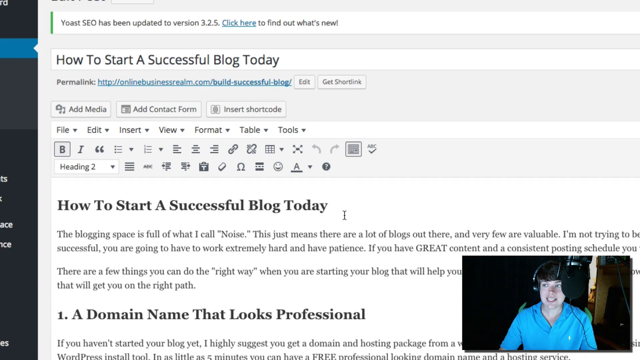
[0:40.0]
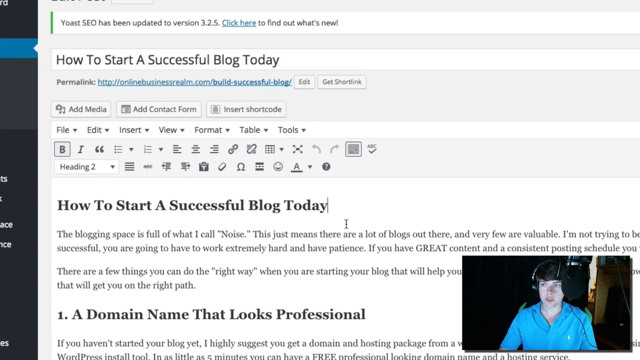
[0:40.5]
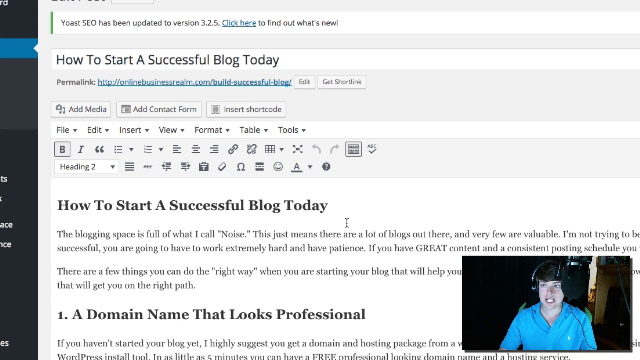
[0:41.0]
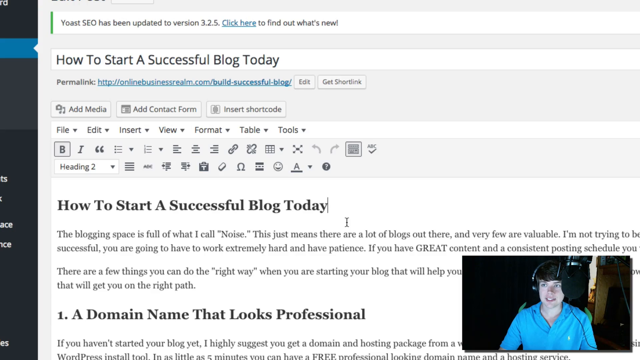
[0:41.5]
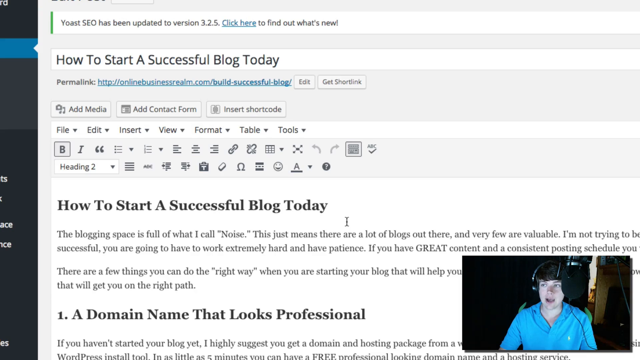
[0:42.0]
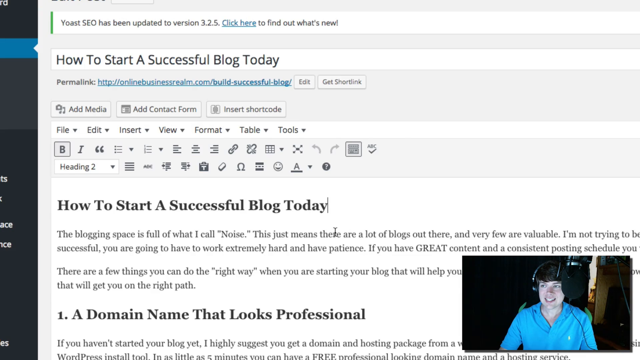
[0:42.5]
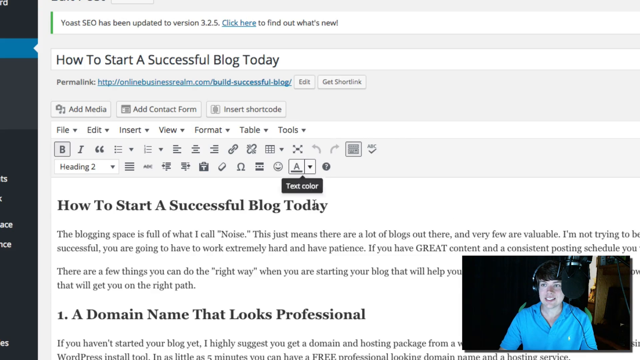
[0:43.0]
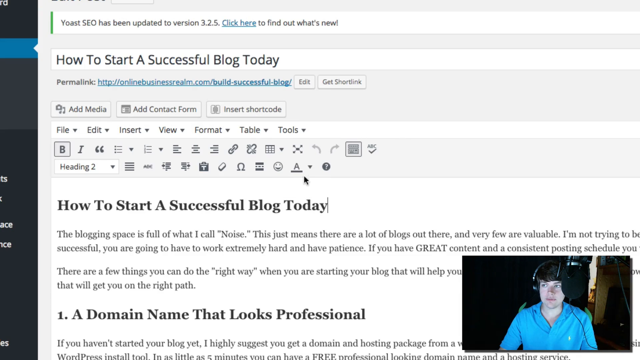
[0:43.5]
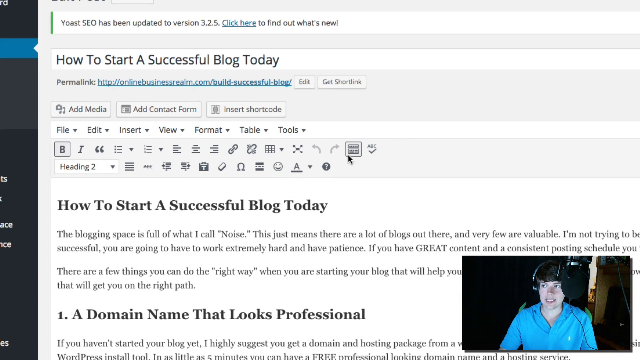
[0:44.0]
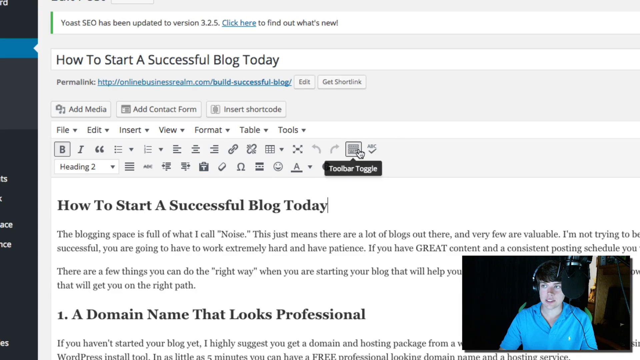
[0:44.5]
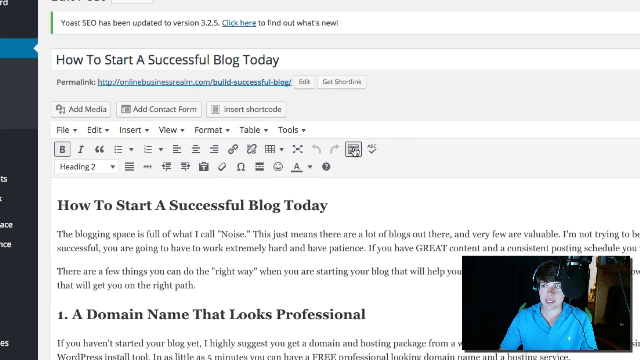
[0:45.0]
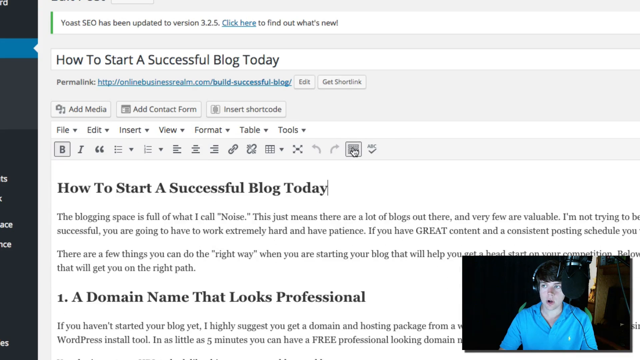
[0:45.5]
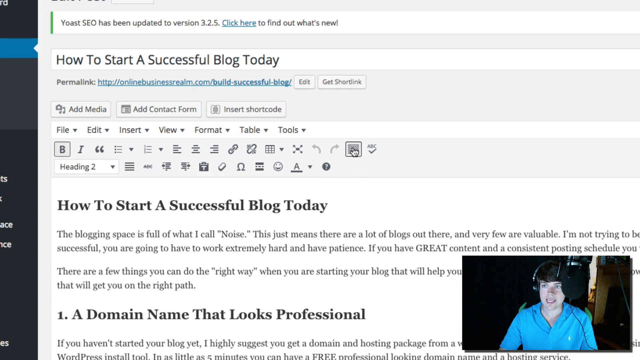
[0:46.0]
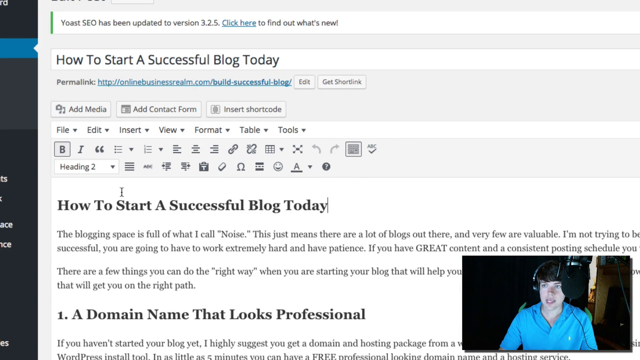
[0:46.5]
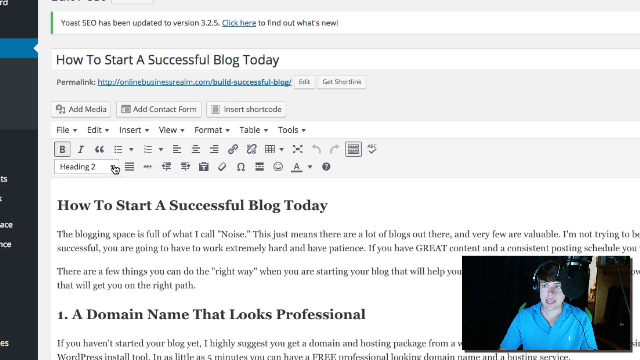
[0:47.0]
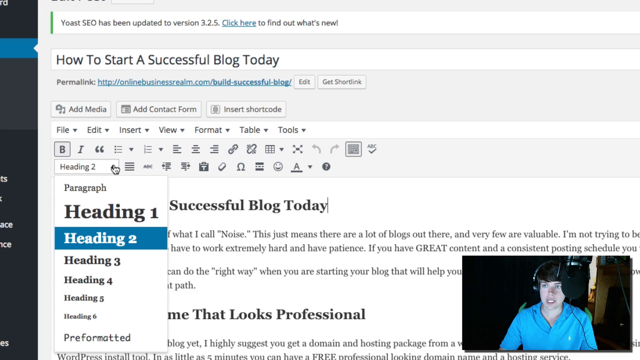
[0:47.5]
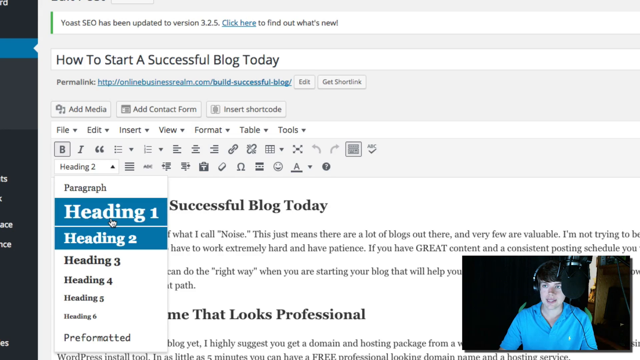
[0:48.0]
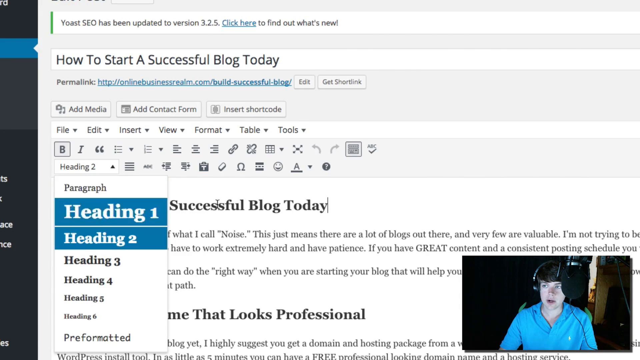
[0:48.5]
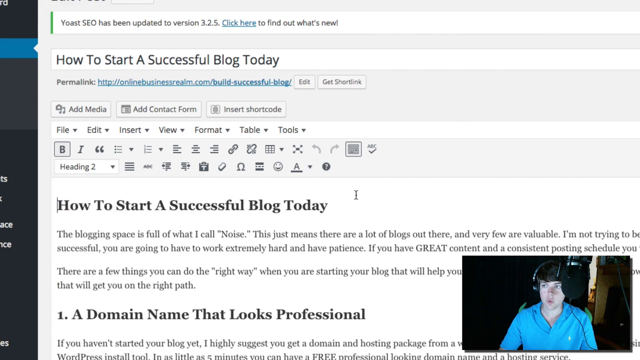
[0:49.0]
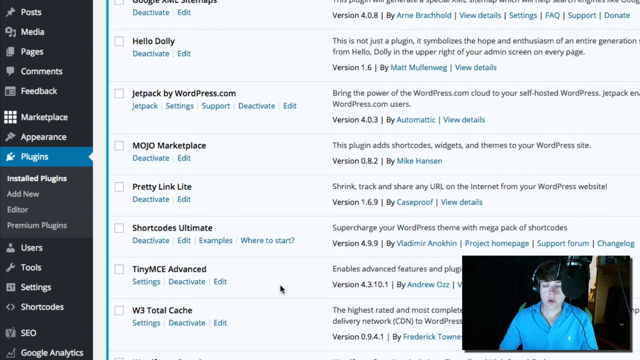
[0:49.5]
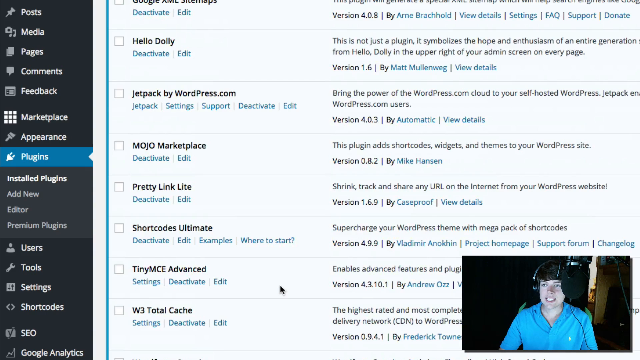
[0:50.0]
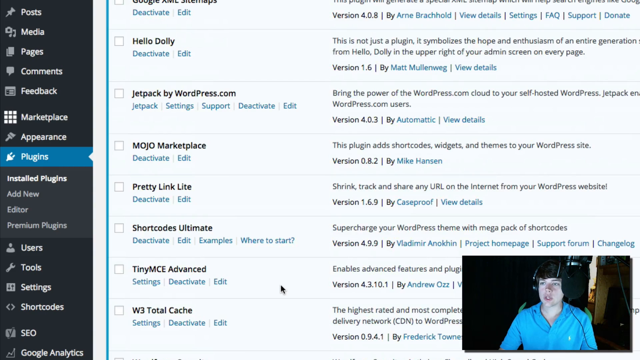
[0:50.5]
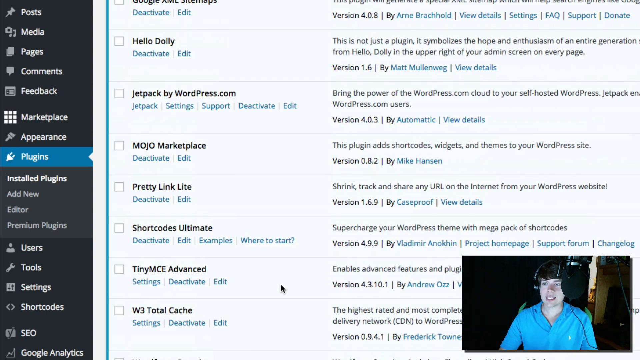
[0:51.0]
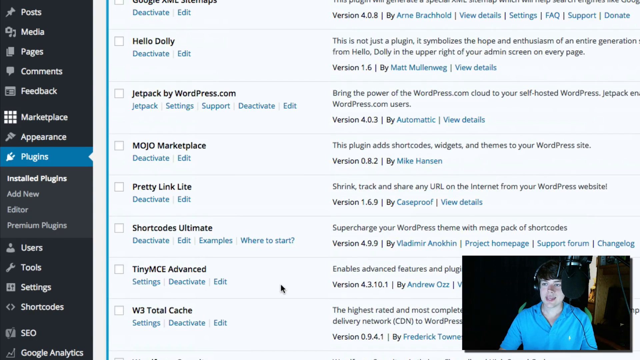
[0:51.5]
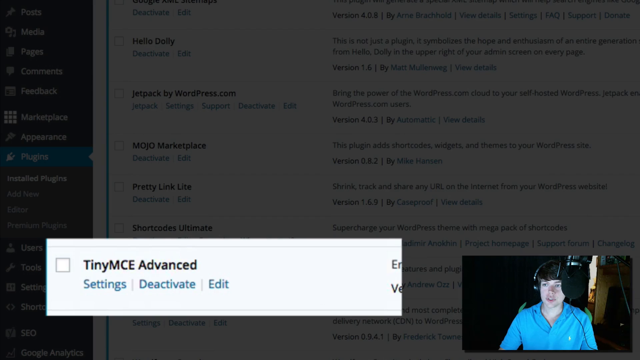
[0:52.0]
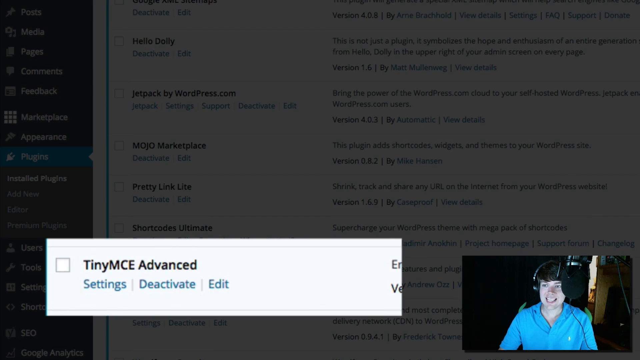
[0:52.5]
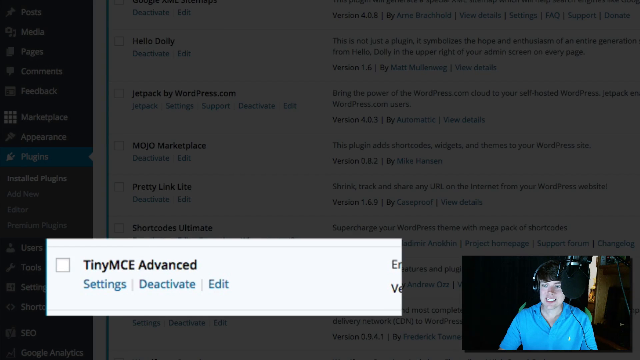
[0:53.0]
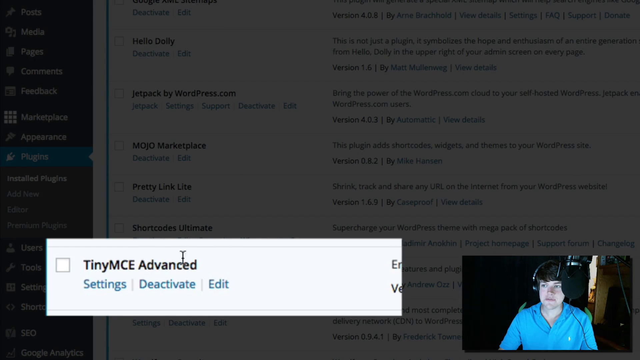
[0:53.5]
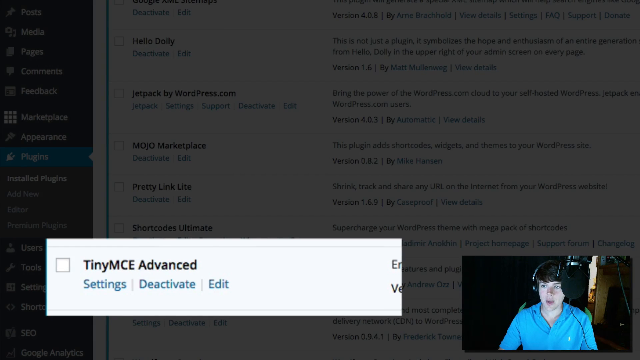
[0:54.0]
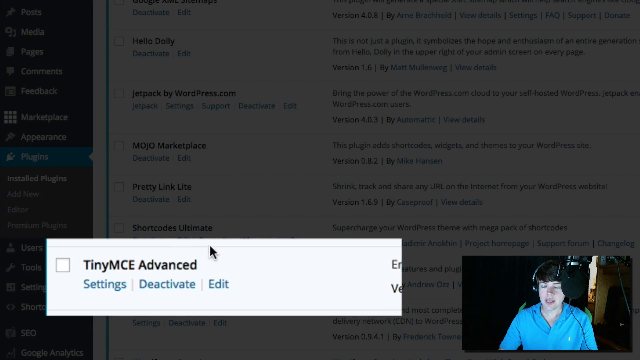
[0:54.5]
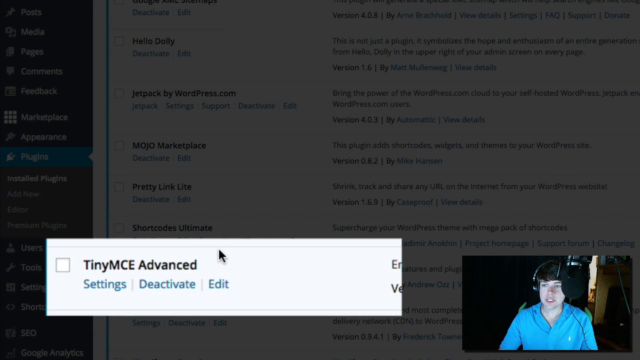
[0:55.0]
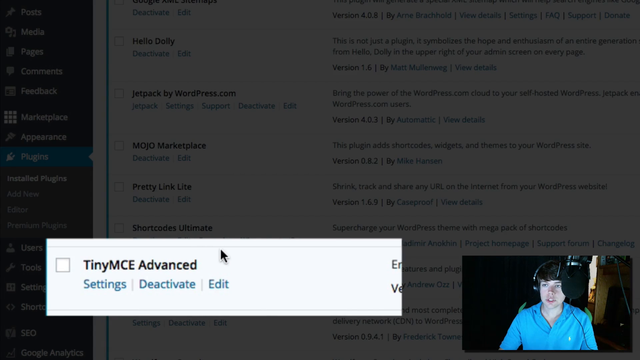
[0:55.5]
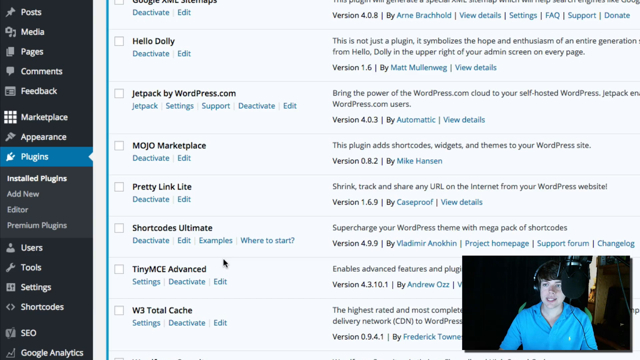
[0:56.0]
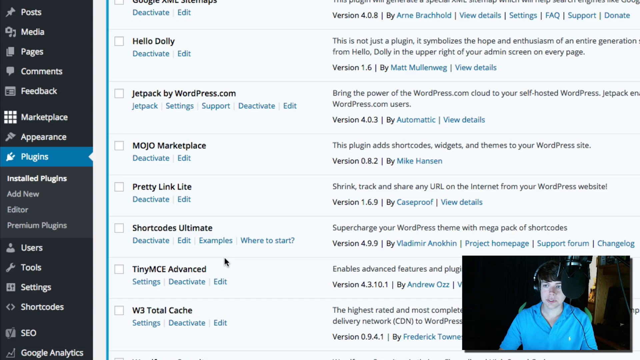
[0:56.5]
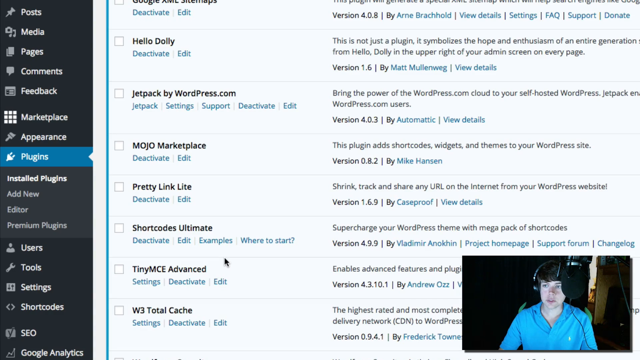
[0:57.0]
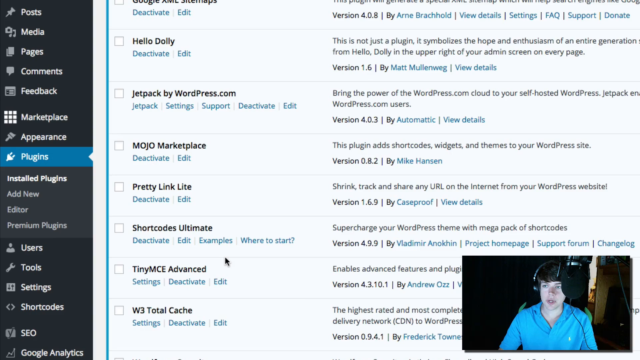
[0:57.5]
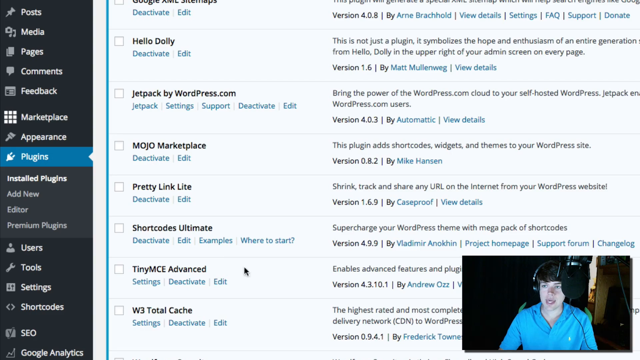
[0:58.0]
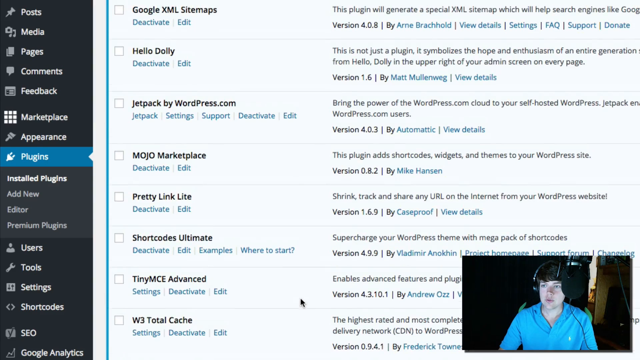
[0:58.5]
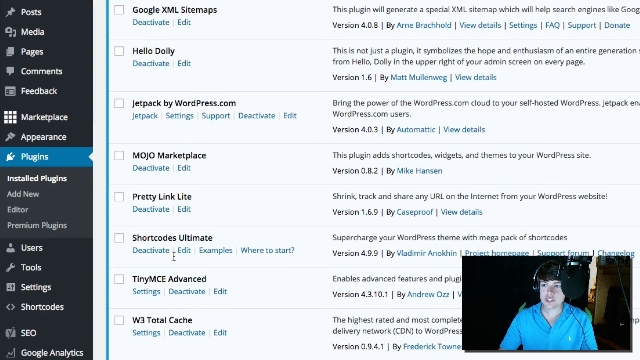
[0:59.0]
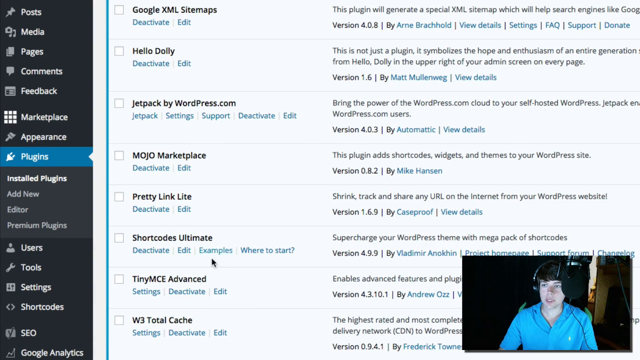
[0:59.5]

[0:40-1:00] The "how to start a successful blog today" page is shown, with a permalink for onlinebusinessrealm.com at the top. Underneath is "add media", and the view is zoomed in on the file, edit and insert menus and the other page-editing controls. In the bottom right-hand corner is a live video feed of a podcast: a young man in a blue shirt with over-the-ear earphones and a boom mic. He is zoomed in on the page and moves his mouse around in circles while going over the different toolbar options. He sets the header size, then goes back to the TinyMCE Advanced settings under the plug-ins.